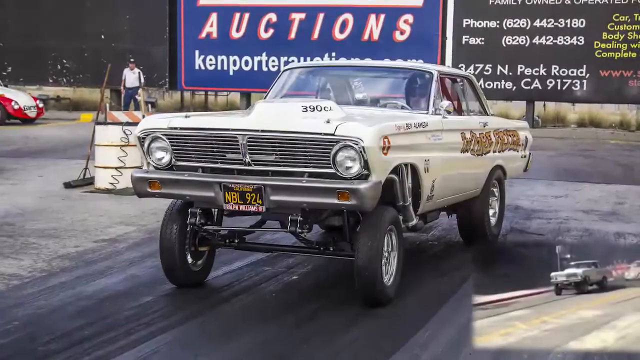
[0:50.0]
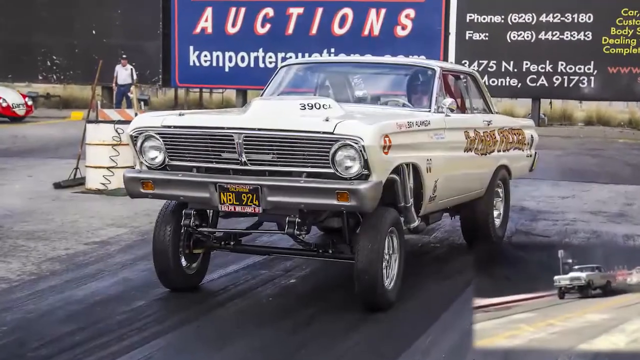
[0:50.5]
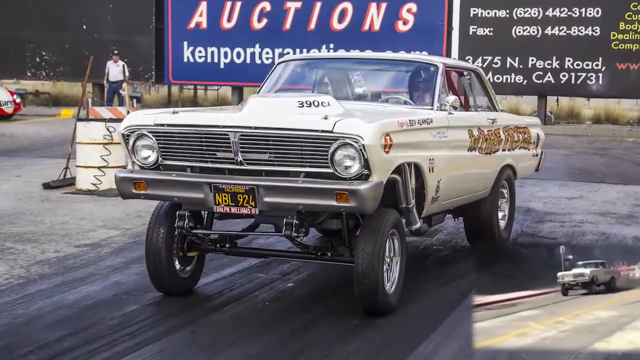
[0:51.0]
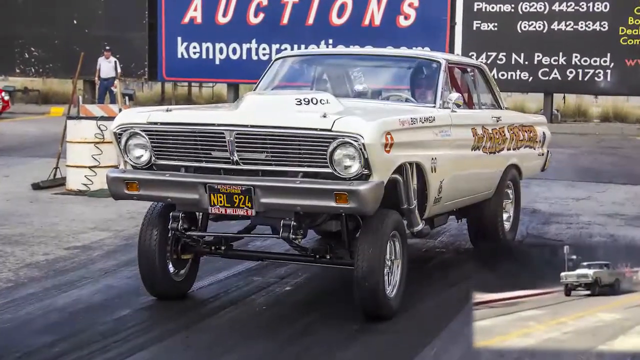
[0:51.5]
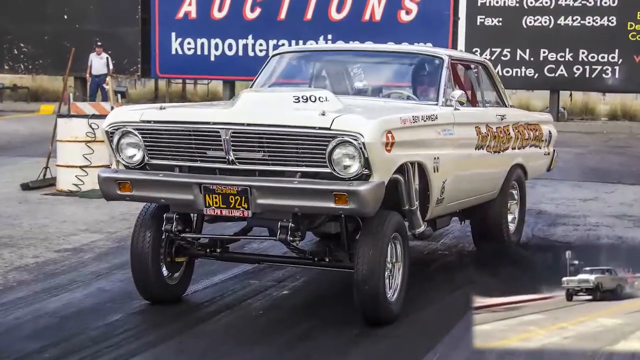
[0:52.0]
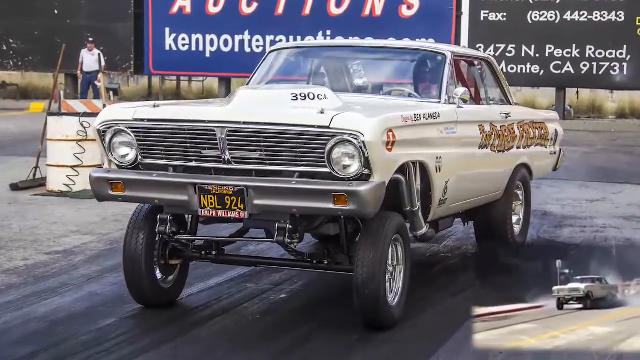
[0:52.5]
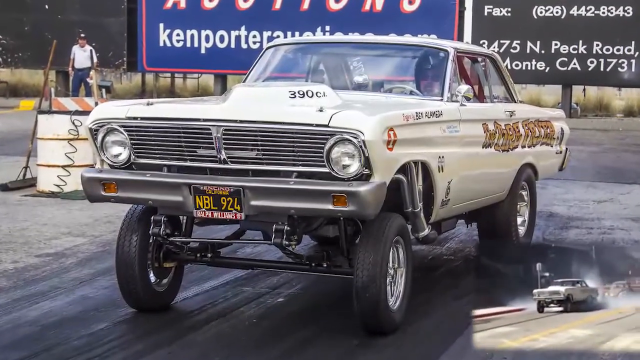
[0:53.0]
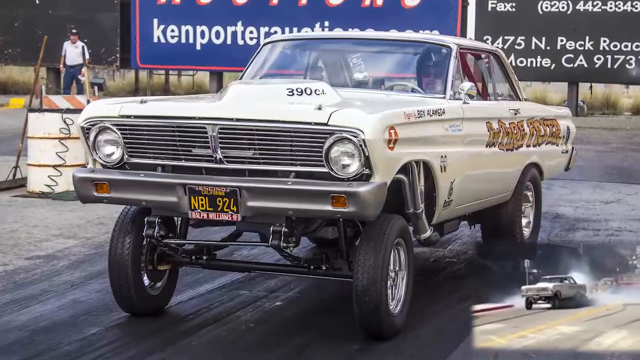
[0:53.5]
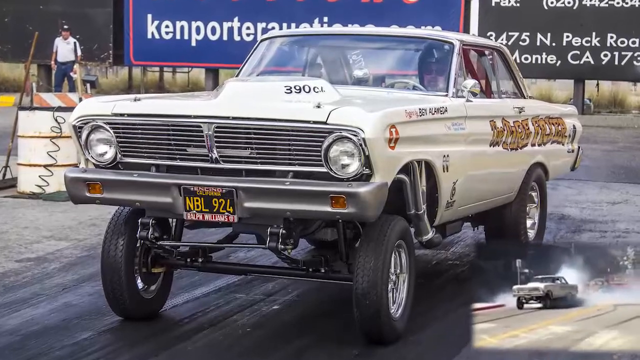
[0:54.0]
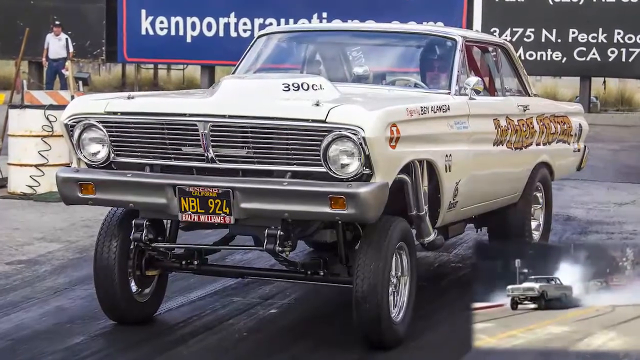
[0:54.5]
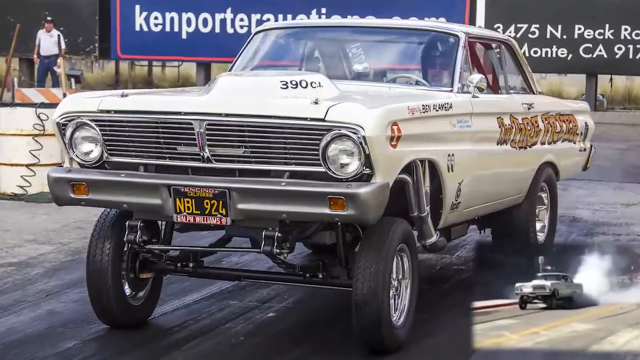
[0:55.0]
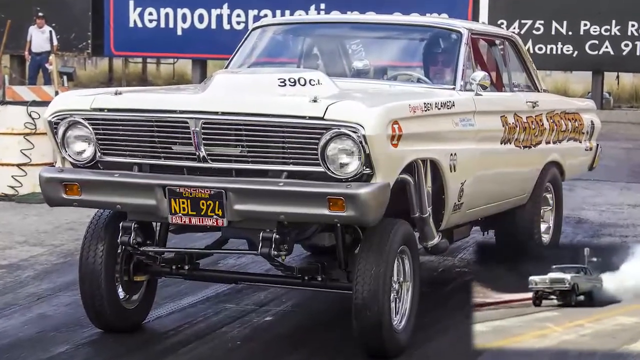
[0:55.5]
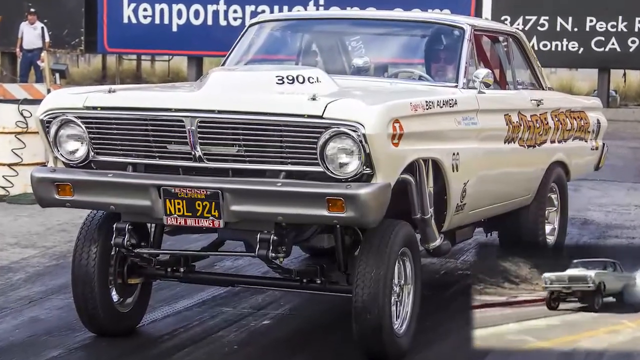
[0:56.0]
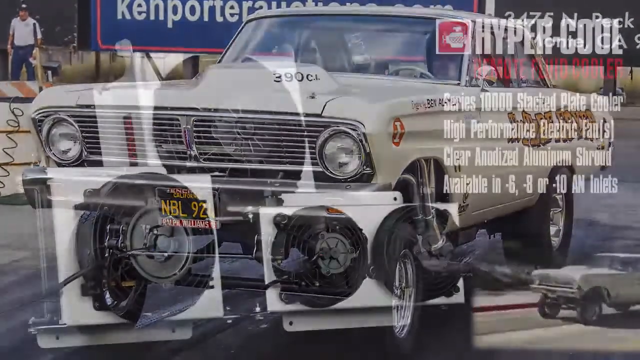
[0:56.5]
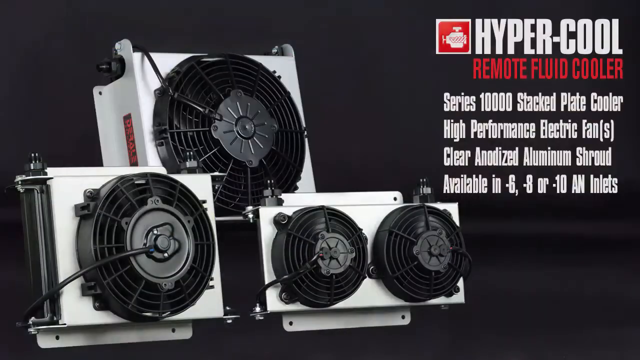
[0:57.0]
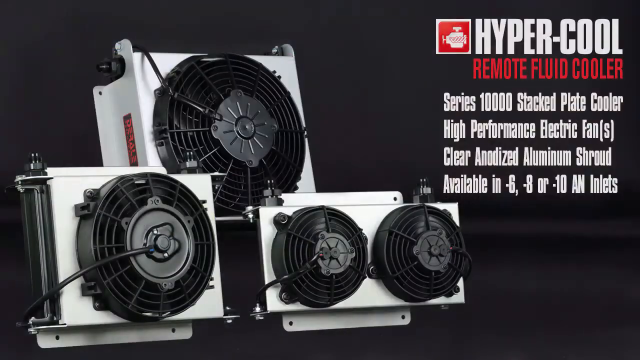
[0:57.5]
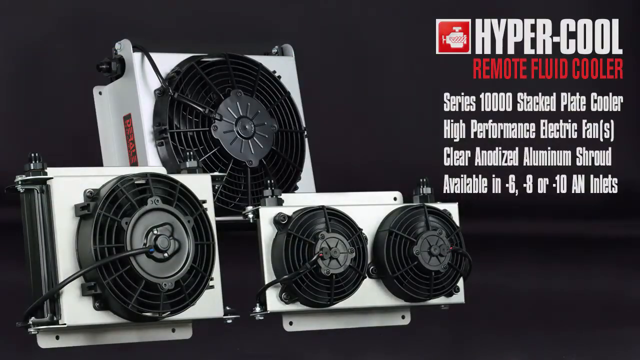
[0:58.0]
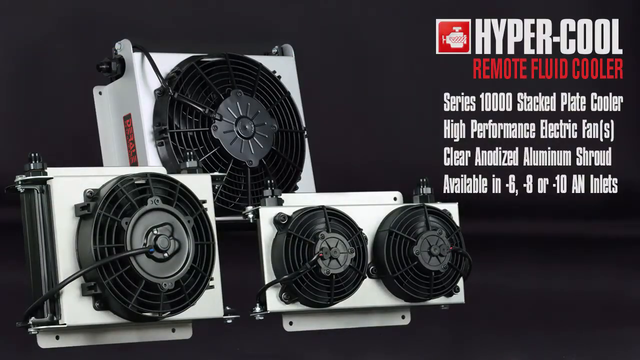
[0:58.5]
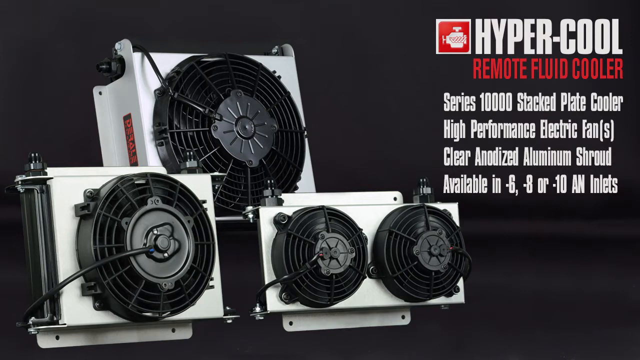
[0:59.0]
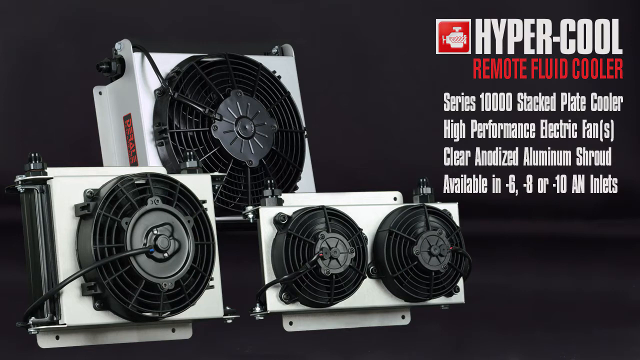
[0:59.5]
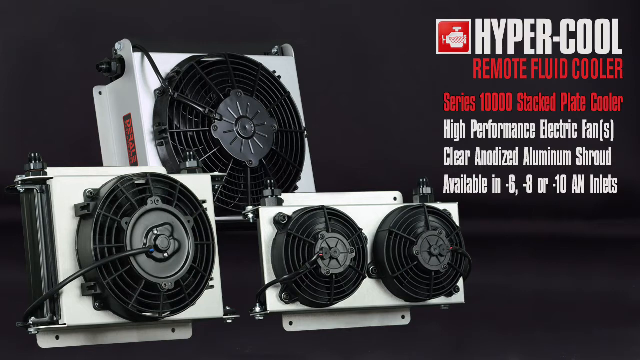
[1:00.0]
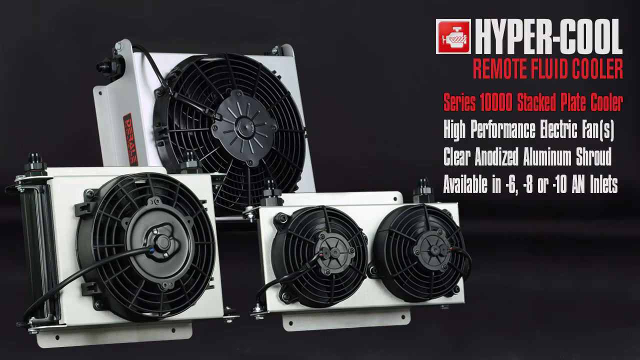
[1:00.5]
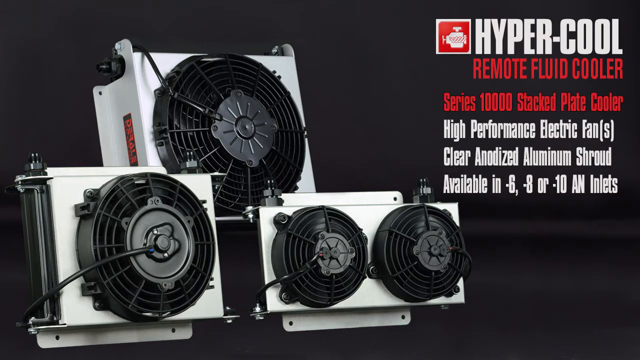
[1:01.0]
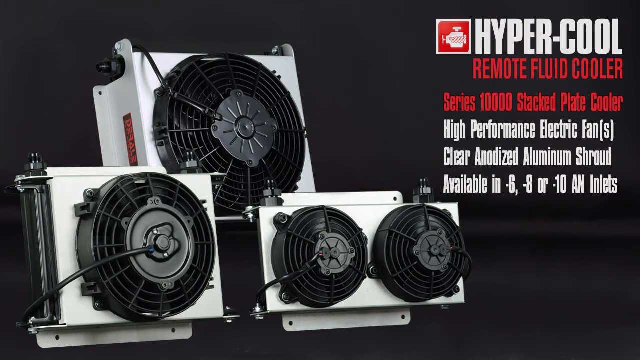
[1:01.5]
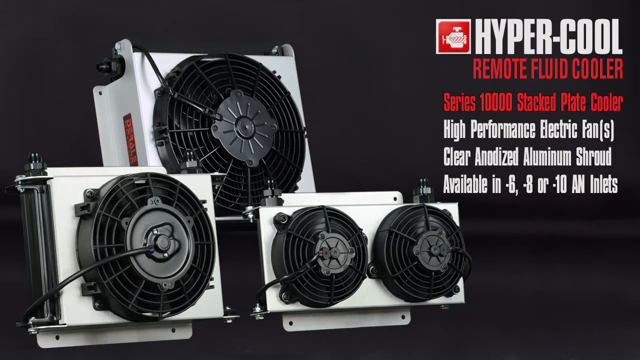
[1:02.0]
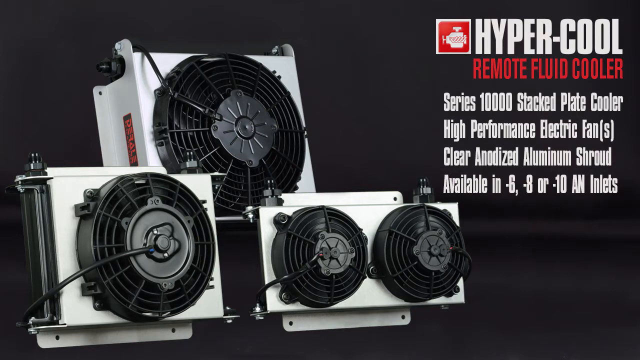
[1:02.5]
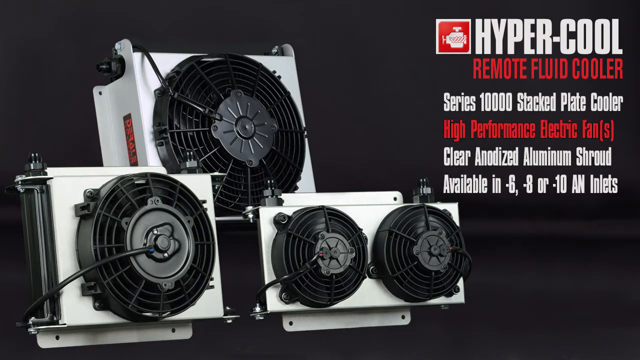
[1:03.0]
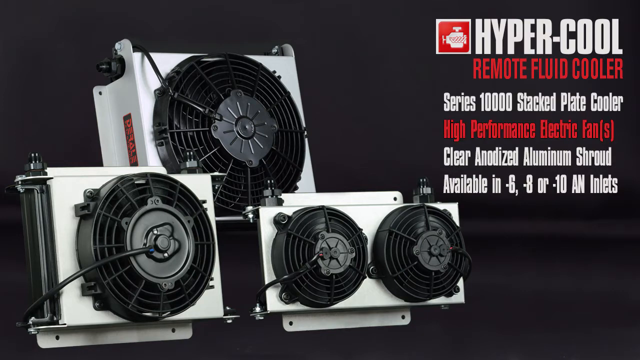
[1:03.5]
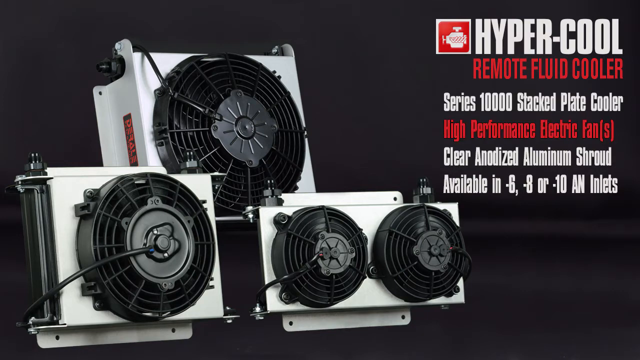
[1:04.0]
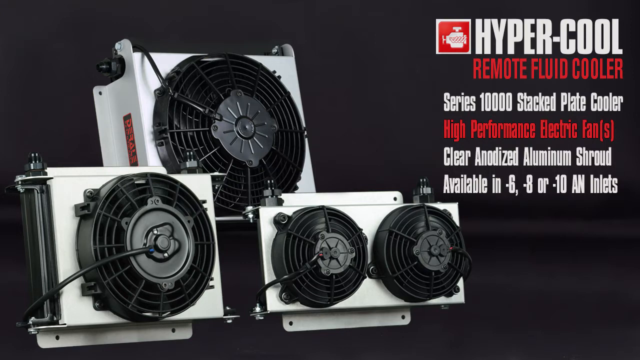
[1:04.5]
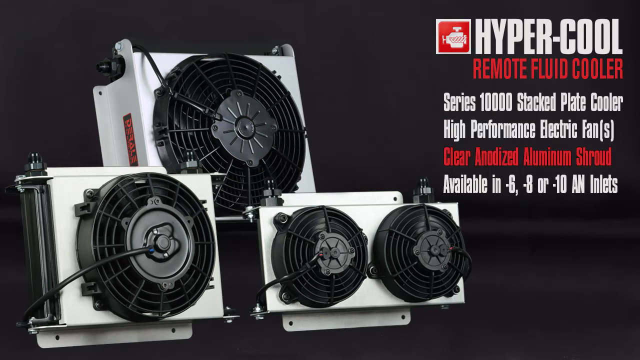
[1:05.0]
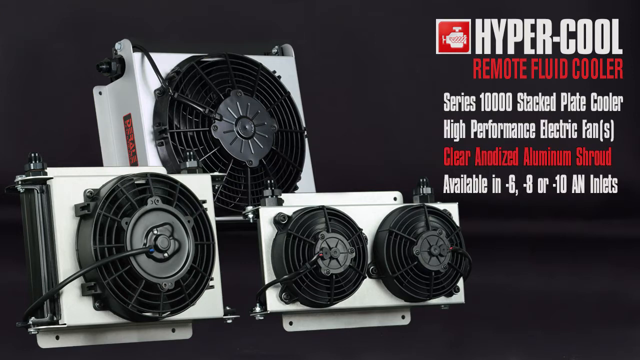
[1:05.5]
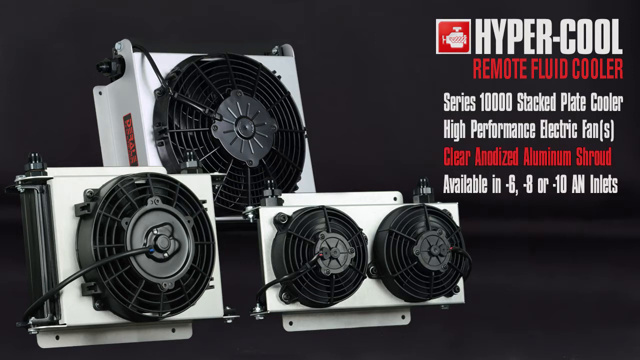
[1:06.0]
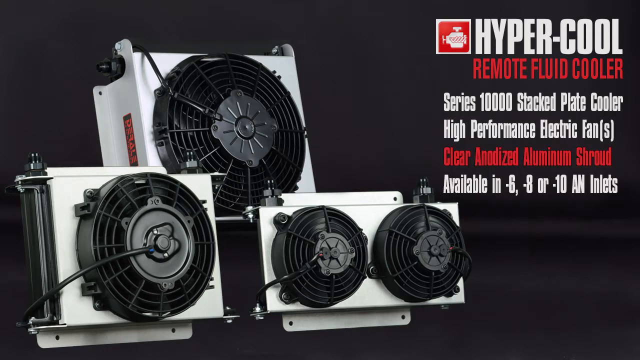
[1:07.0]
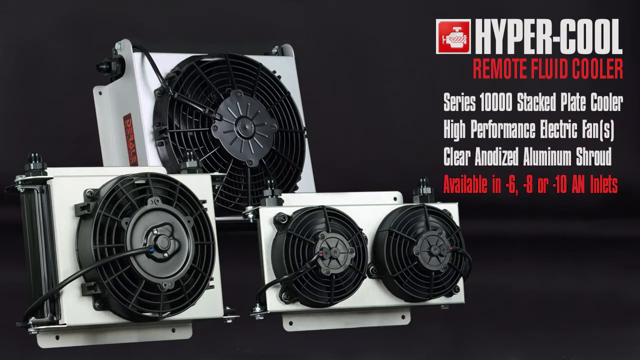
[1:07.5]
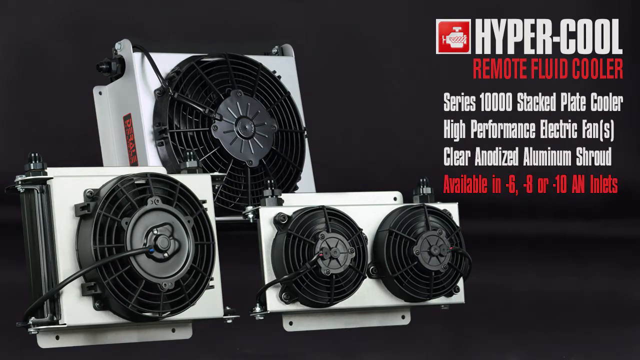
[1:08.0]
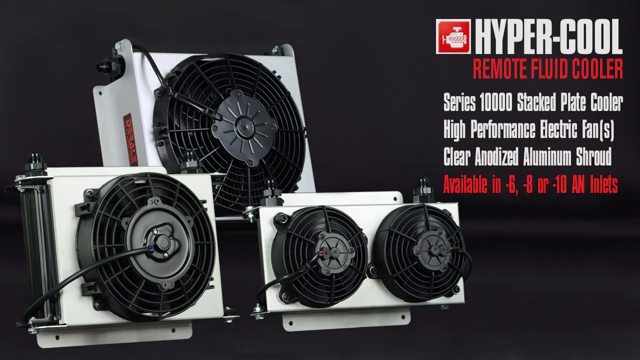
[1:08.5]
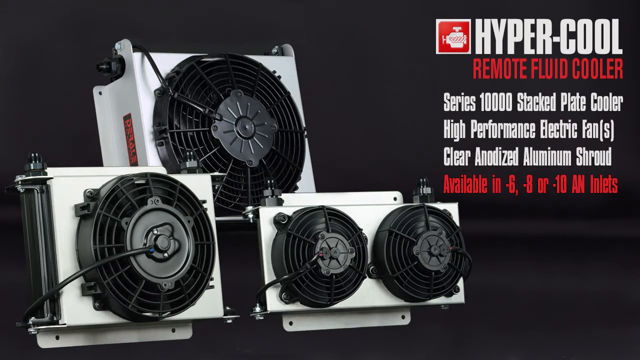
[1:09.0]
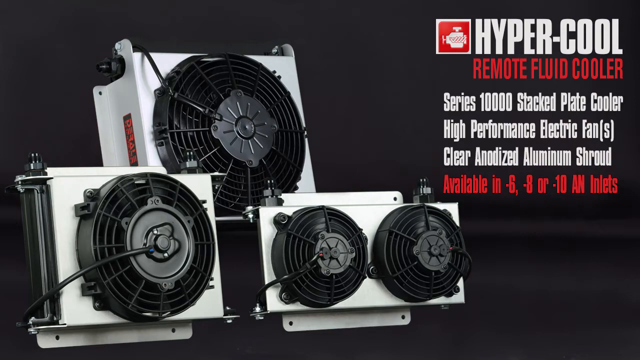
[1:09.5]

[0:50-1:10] A car has its front wheels up, raised far from the ground. A driver is visible, and the car has some kind of graffiti on its side. This is a picture, and in its bottom right a video shows the same car driving with a lot of smoke coming from it. Then an advertisement appears for the "Hypercool Remote Fluid Cooler", which seems to cool down the temperature of a car, with text reading "series 1000 stack plate cooler with high performance electric fans, clear anodized aluminum shroud available in minus six, minus eight or minus 10 AN inlets". It seems to be installed in a car's engine to reduce the temperature the car produces.